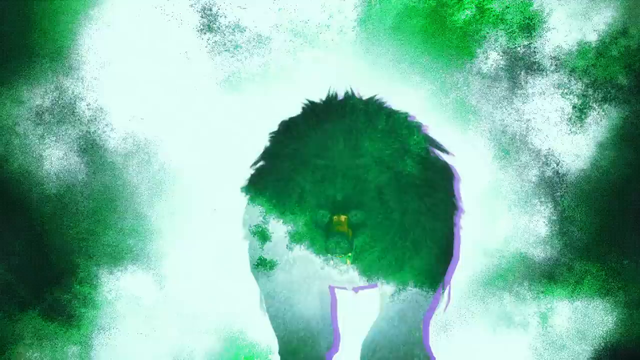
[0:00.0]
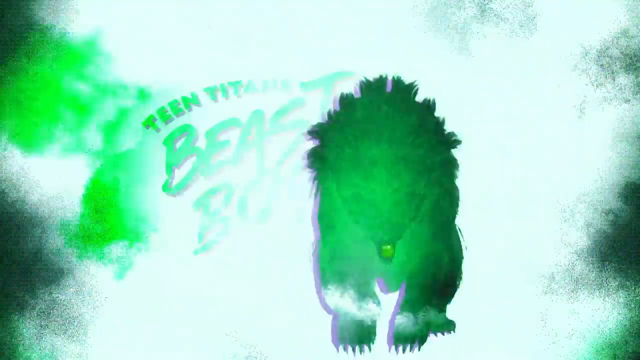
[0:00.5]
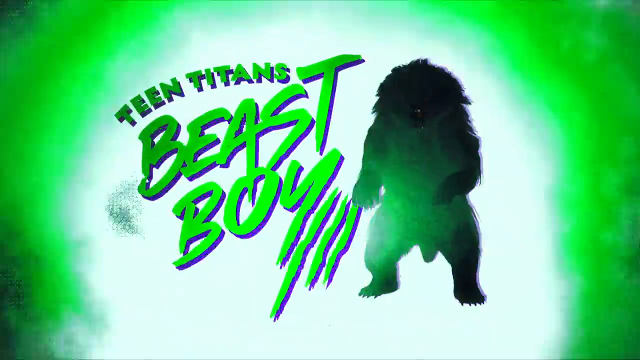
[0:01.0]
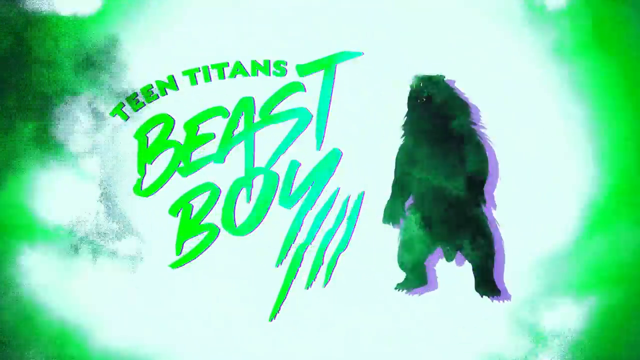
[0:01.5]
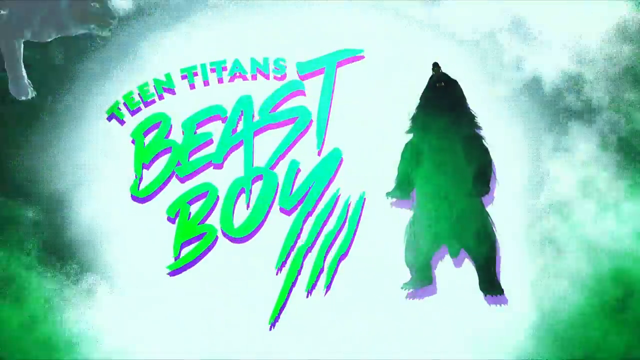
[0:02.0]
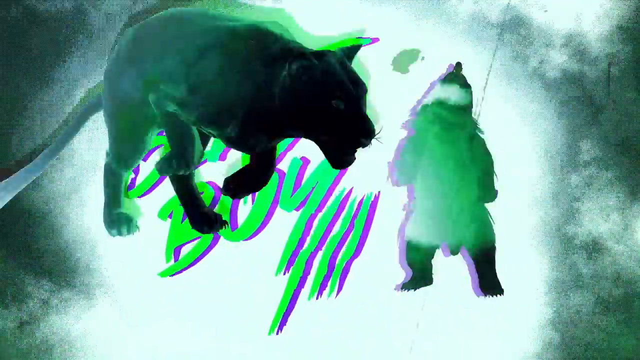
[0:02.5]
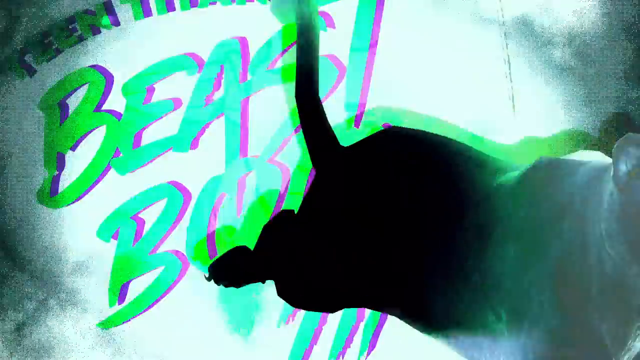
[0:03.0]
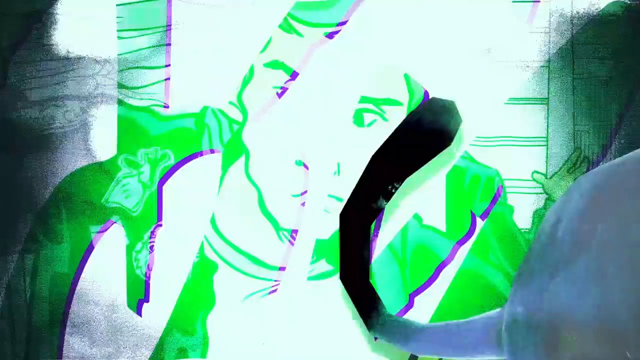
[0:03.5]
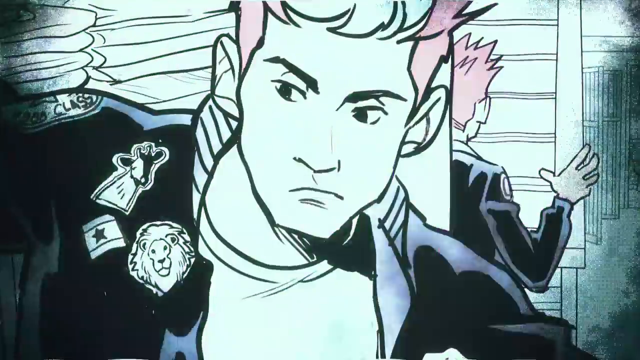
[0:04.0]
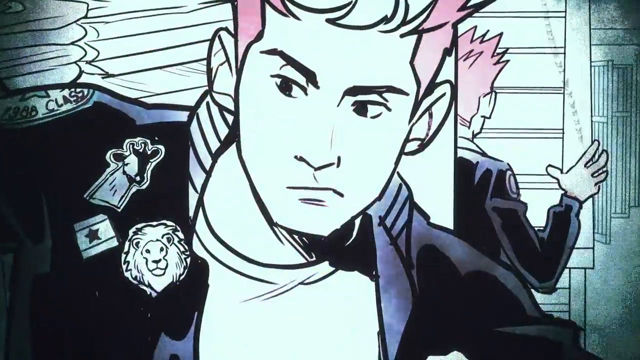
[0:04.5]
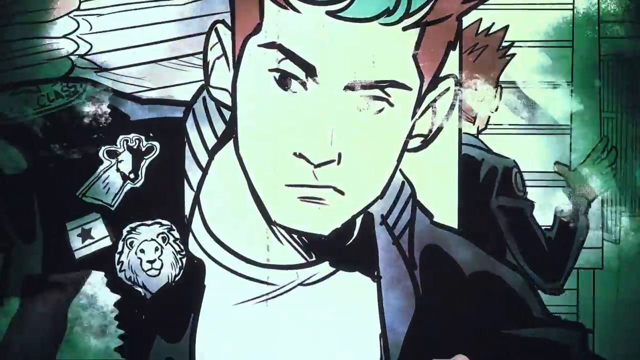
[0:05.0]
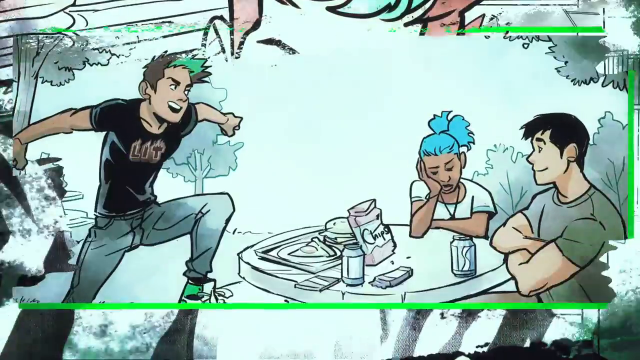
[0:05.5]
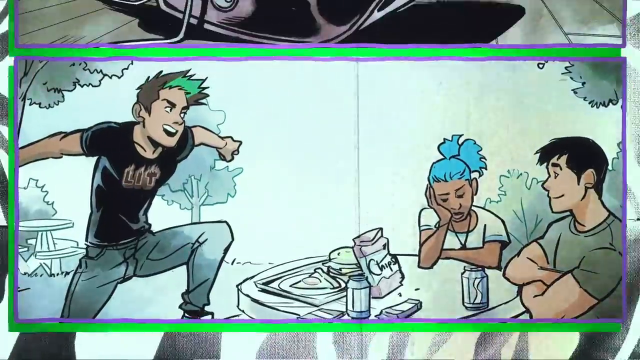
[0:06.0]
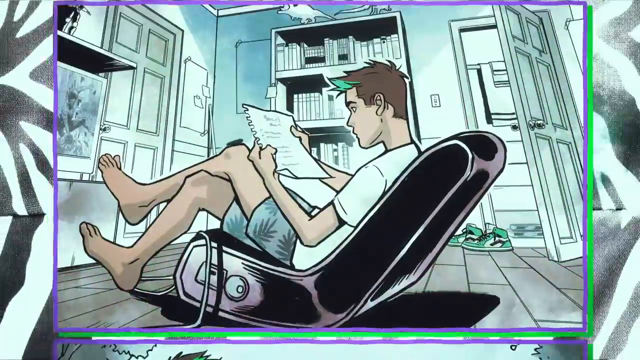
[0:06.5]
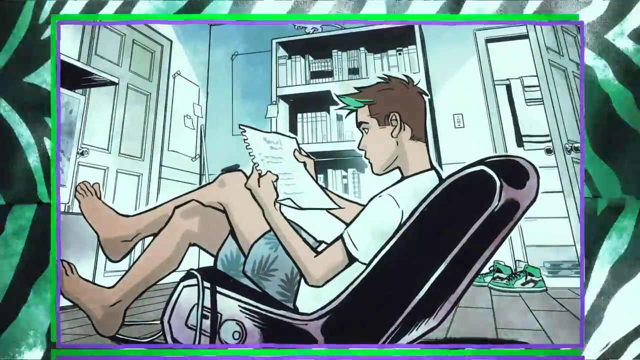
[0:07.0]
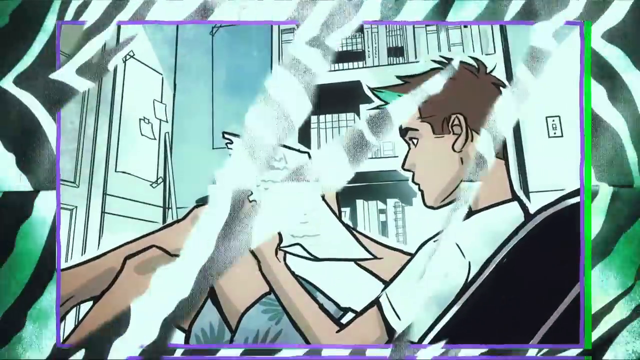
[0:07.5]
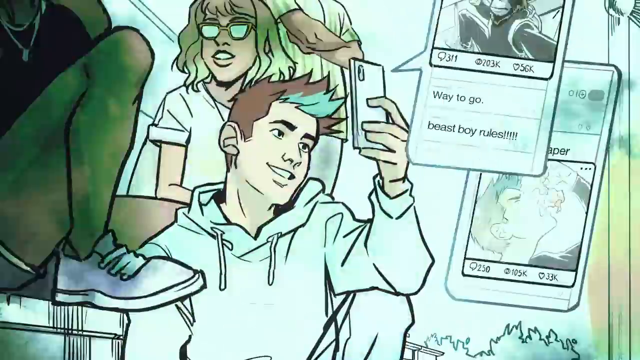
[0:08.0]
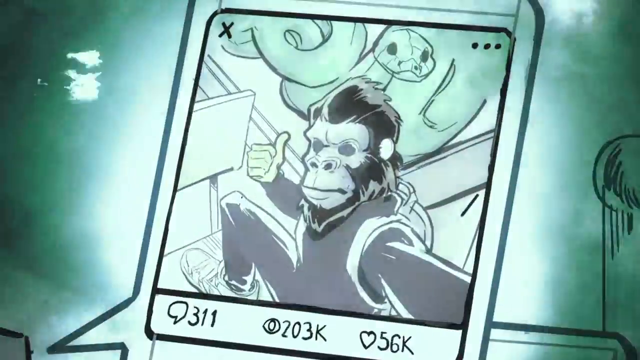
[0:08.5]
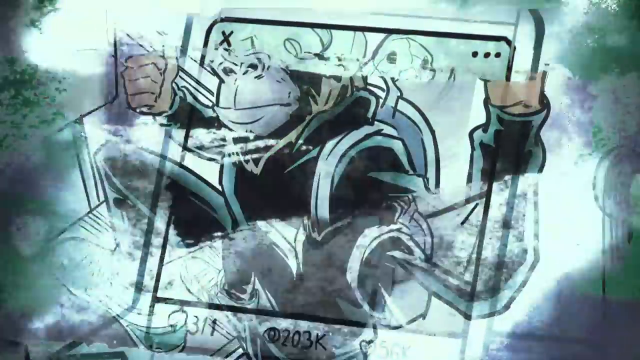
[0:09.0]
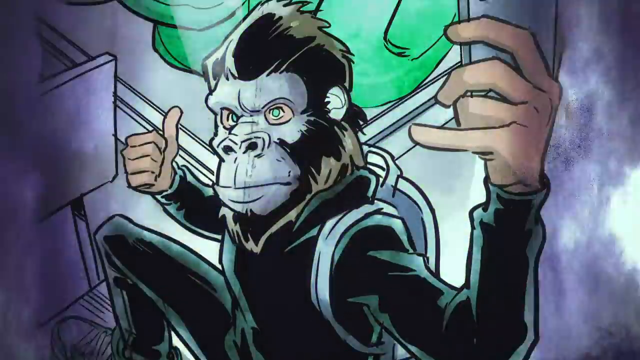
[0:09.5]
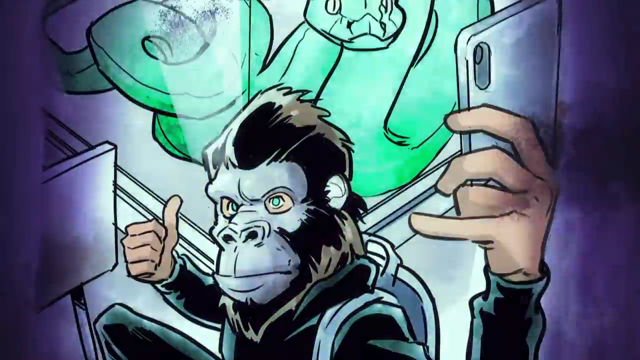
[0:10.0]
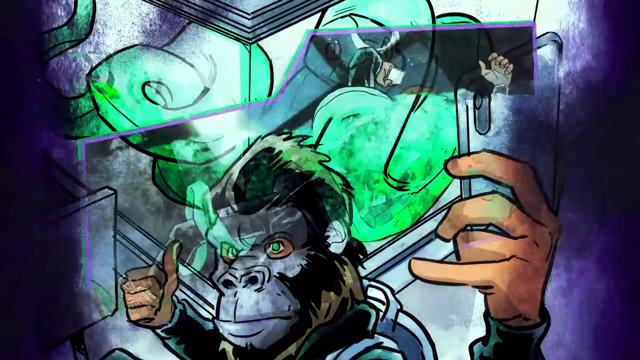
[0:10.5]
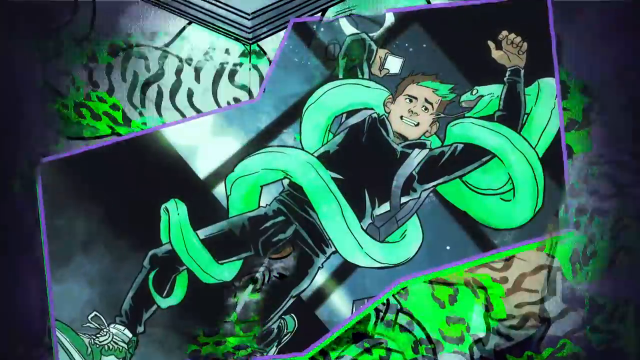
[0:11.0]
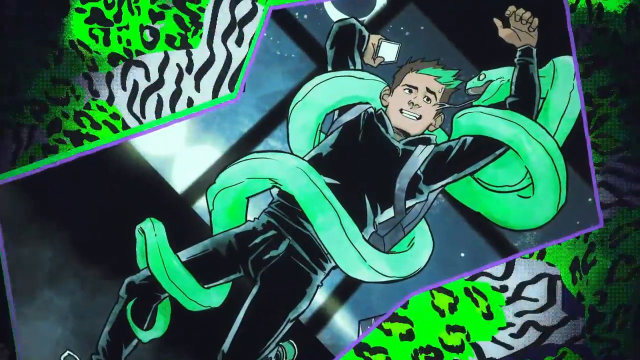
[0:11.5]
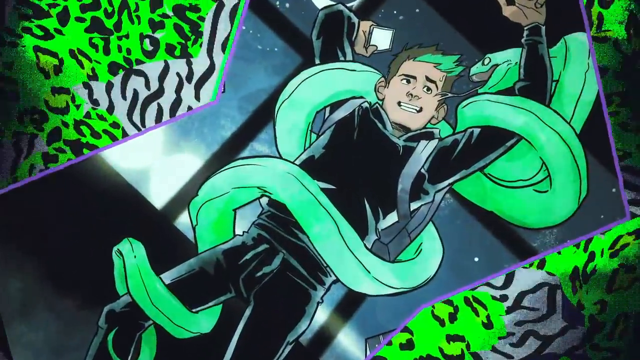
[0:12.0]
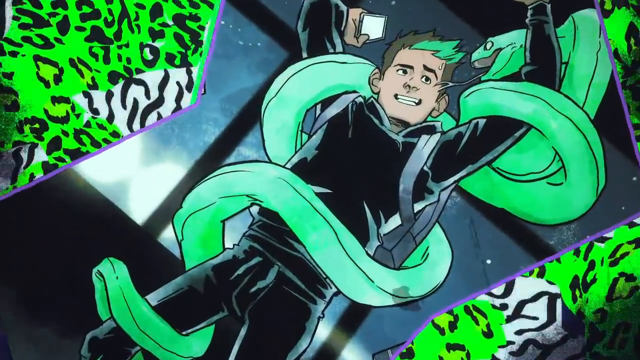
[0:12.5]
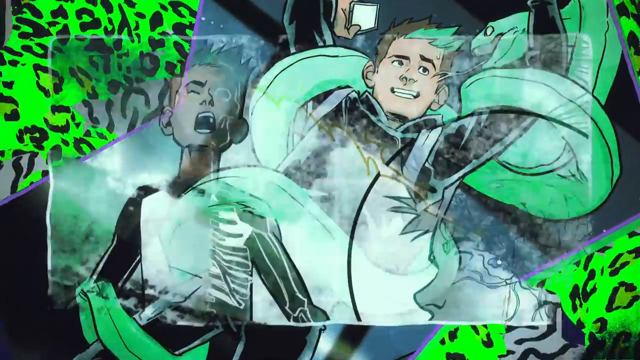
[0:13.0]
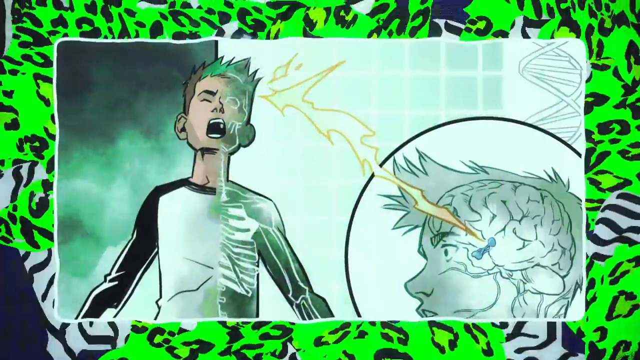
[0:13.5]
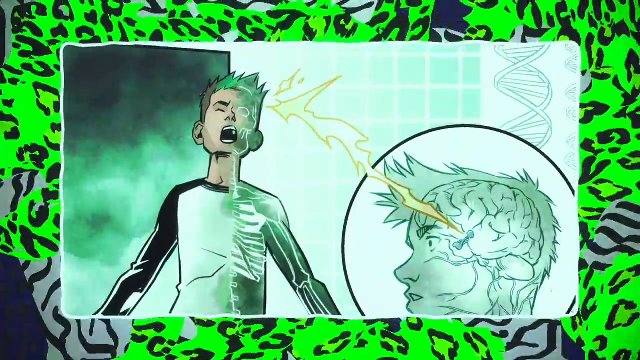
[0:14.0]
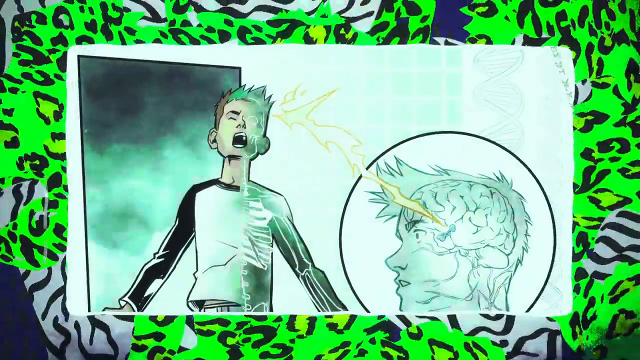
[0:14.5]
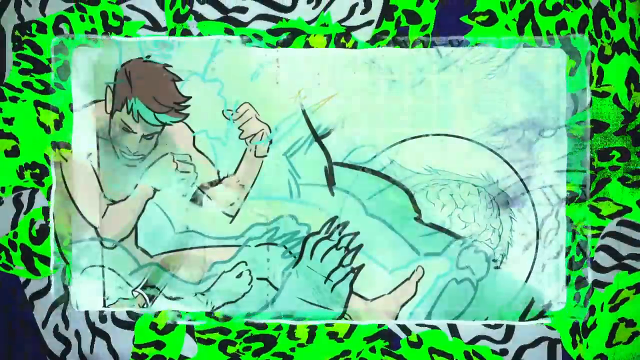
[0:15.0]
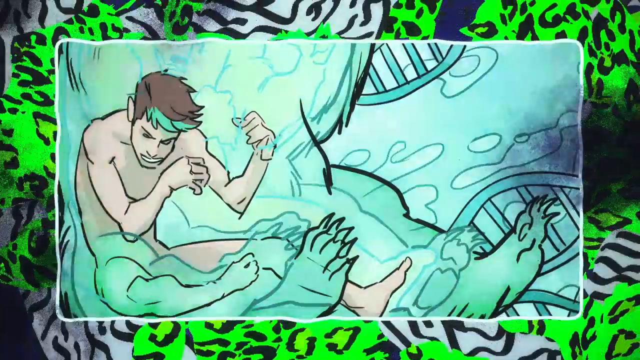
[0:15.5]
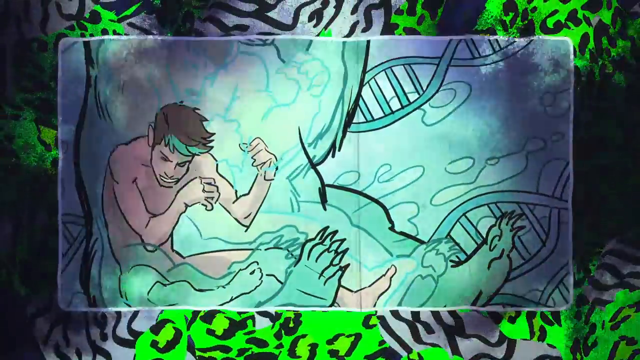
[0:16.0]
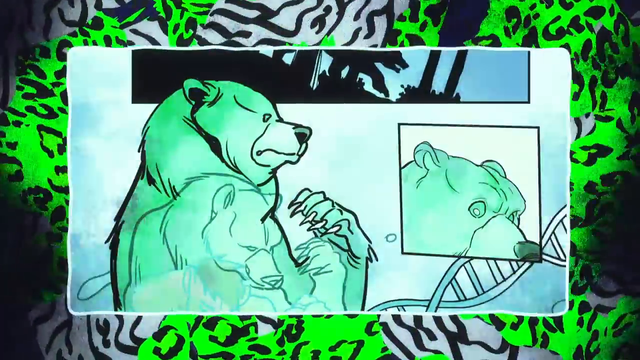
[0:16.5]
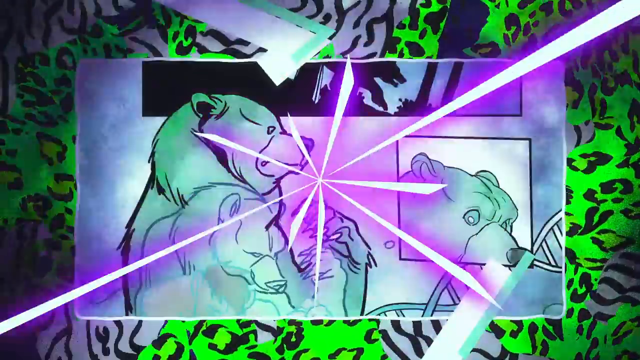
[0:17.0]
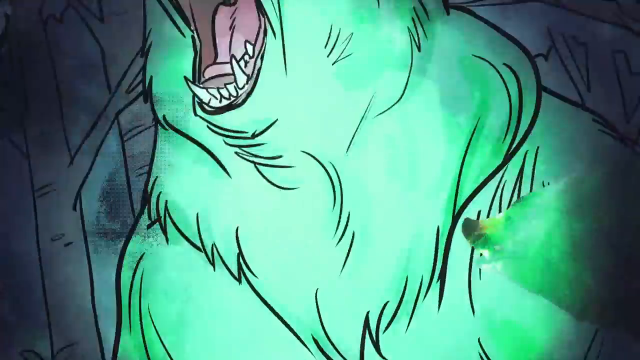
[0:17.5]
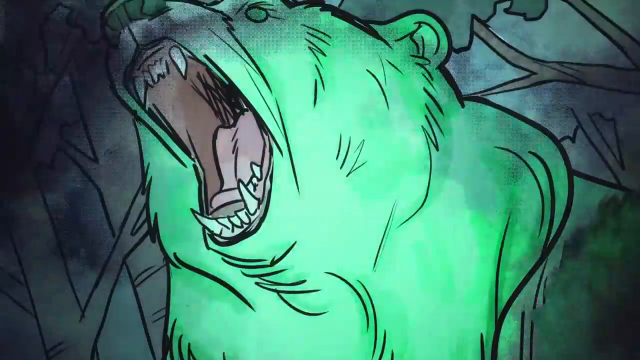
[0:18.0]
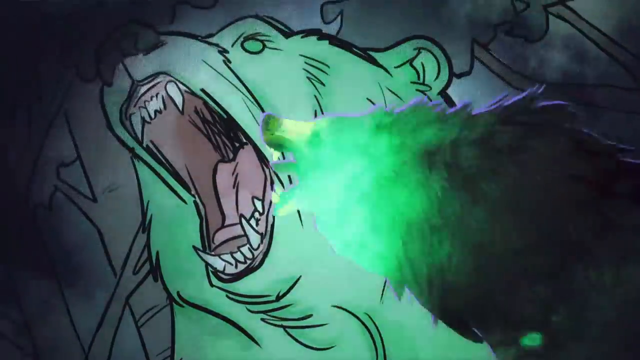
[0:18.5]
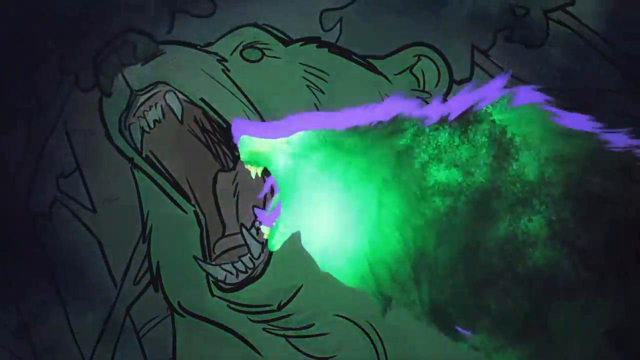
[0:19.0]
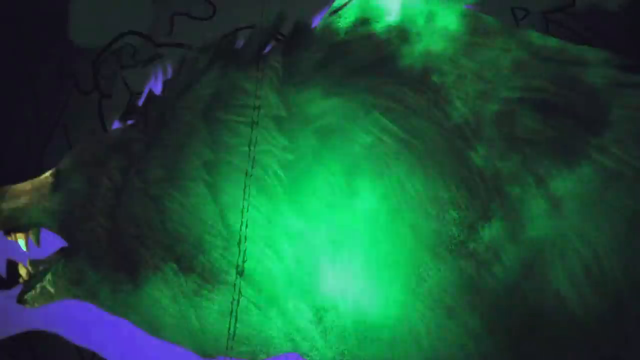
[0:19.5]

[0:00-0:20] The video opens with what looks kind of like a green monster, which turns into something like a growling bear. Green text reads "Teen Titans Beast Boy" in a scary, horror-movie-style lettering; "Teen Titans" is smaller and in all caps. The letters are a bright green with purple shadowing, and at the bottom line of the Y in "Boy" there are three more slash-like marks. There is glowing white in the background with glowing green all around it. What looks like a panther comes from the upper left and runs across the screen. That all goes away and the video moves to a cartoon, comic-book-style graphic. First a boy appears, then a boy comes up to a boy and a girl at a table; the girl has blue hair and her head in her hands. Next, a boy sits in a video gaming chair holding a piece of paper. These are all young people, maybe teenagers. Another graphic shows the boy on the phone, and his screen shows a picture of kind of a man with an ape head with the text "way to go, Beast Boy rules." The view goes close up on the phone, then to a shot of Beast Boy holding the phone with a green serpent behind him. A boy is then wrapped by a green serpent. Next a boy yells, and what looks like a lightning bolt appears; on the right is a side view of him showing his brain, with the lightning bolt going to his head. Another shot apparently shows him turning into a beast, kind of like a green grizzly bear. Lightning bolts follow, and he is now a big green grizzly bear that is yelling. This is probably the opening graphic of the show.